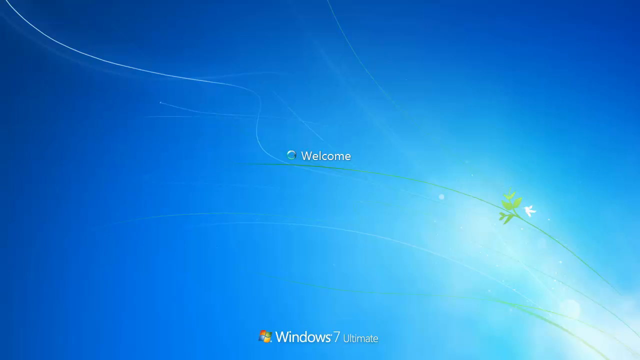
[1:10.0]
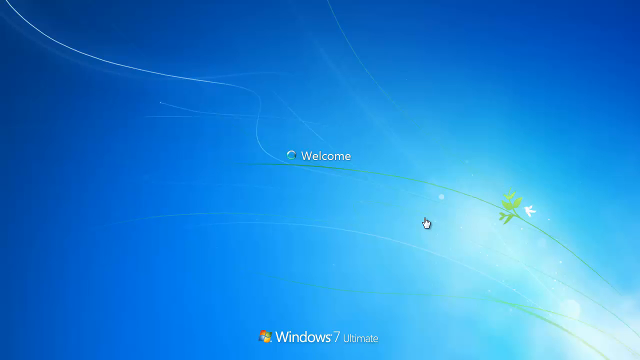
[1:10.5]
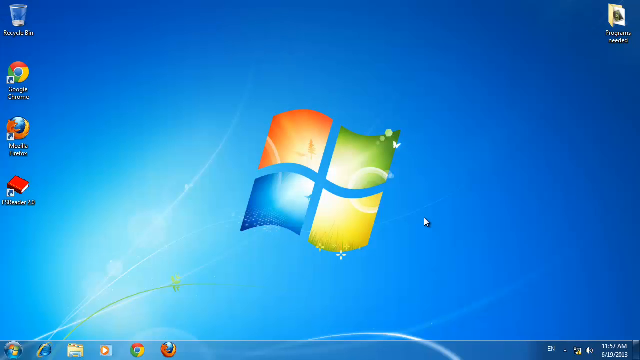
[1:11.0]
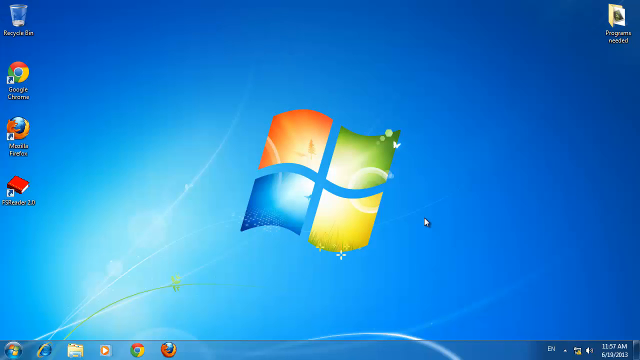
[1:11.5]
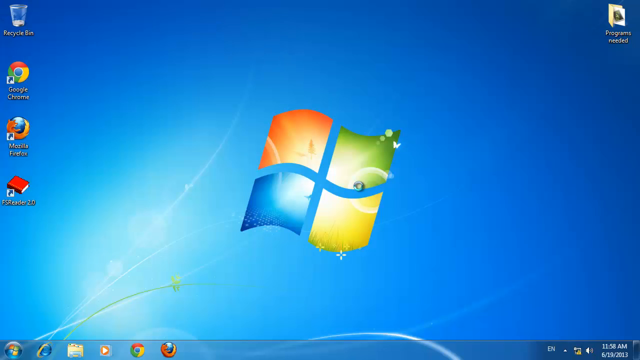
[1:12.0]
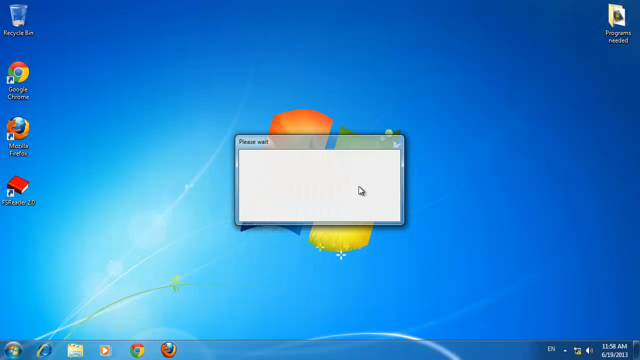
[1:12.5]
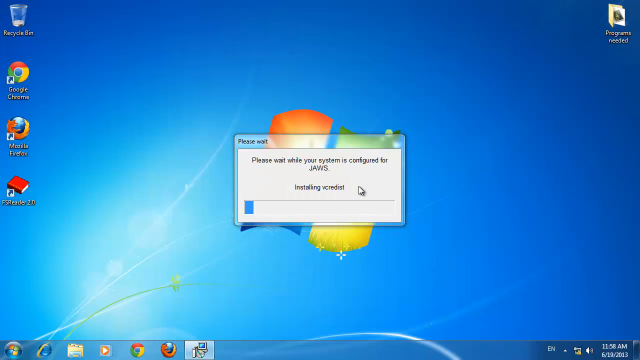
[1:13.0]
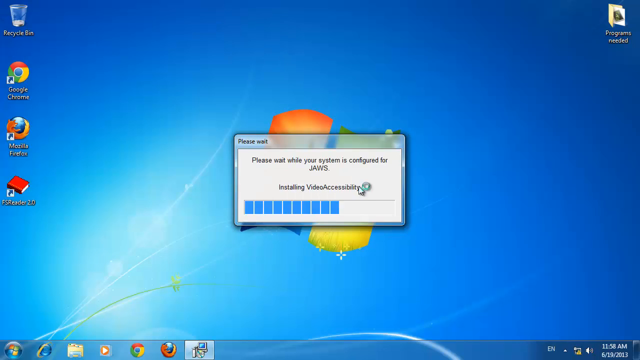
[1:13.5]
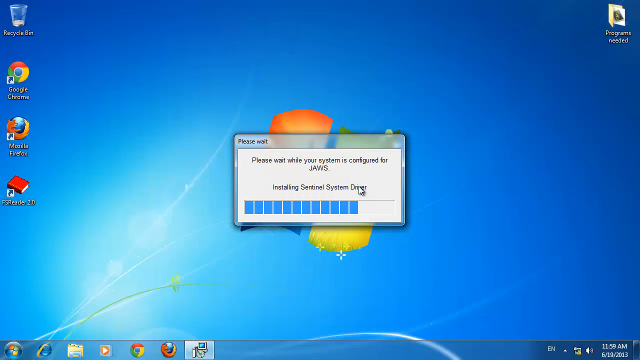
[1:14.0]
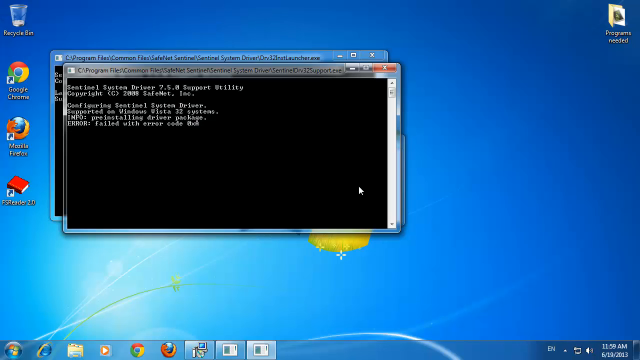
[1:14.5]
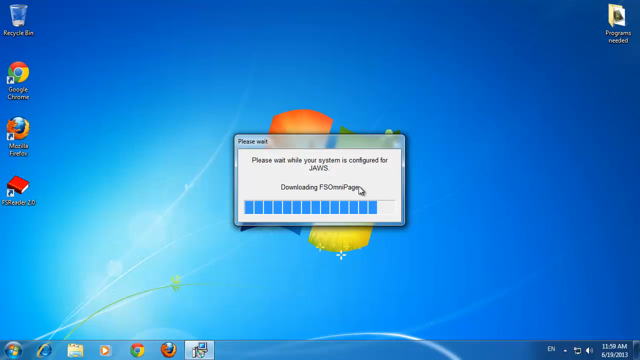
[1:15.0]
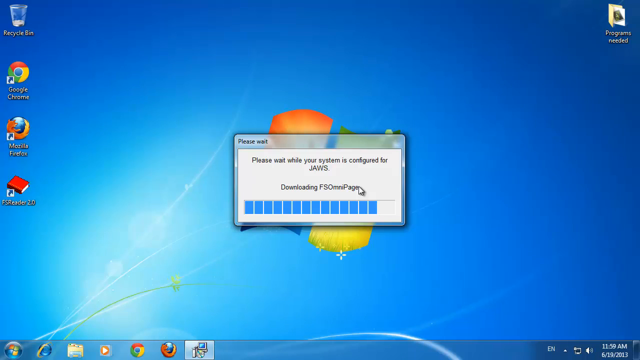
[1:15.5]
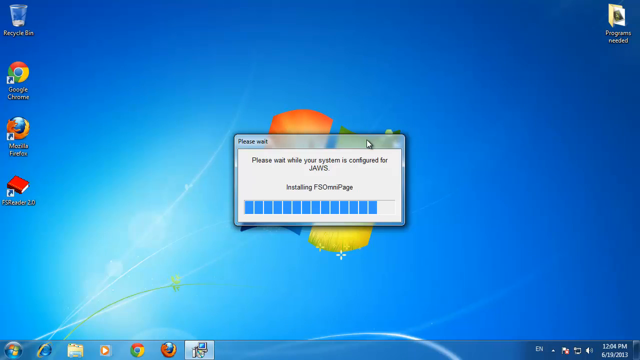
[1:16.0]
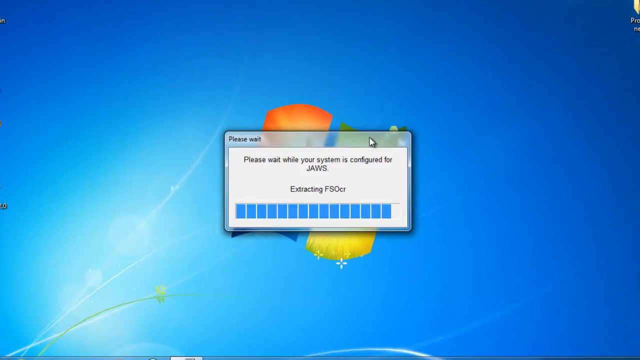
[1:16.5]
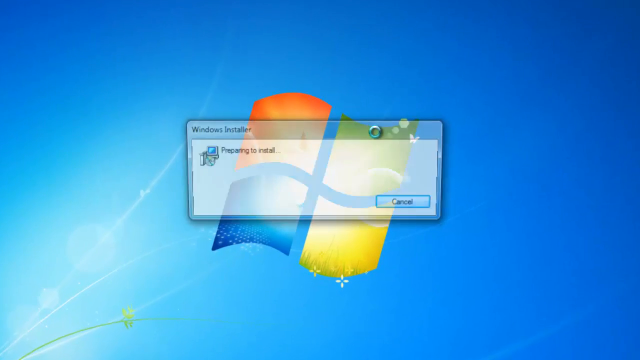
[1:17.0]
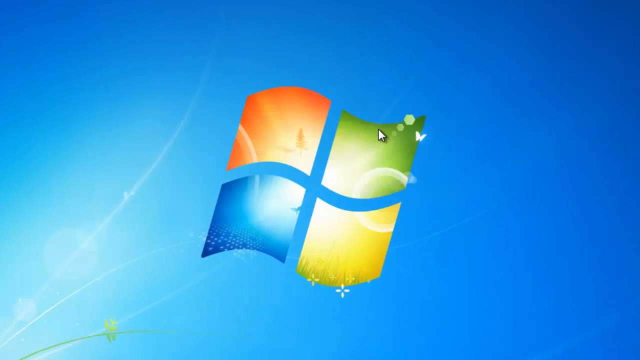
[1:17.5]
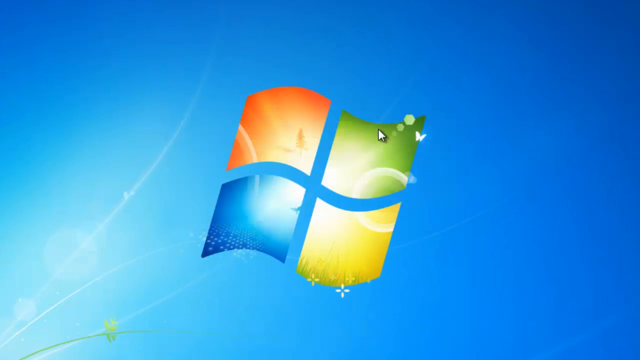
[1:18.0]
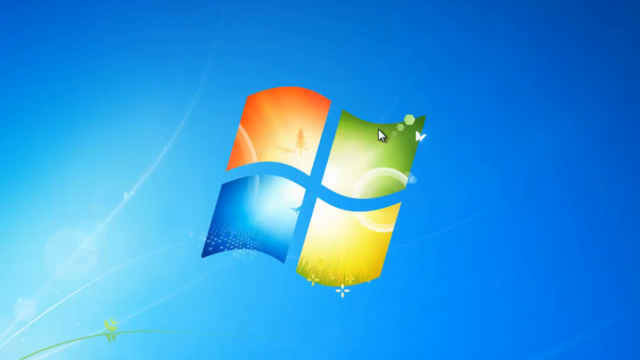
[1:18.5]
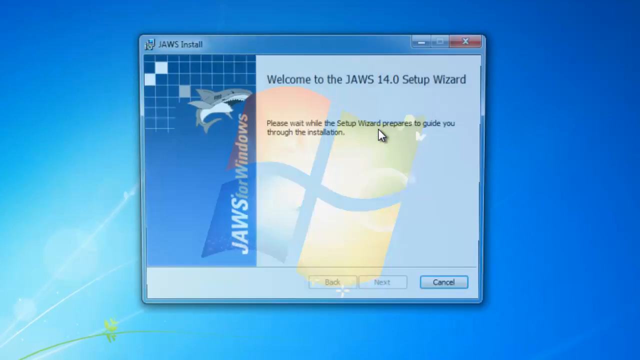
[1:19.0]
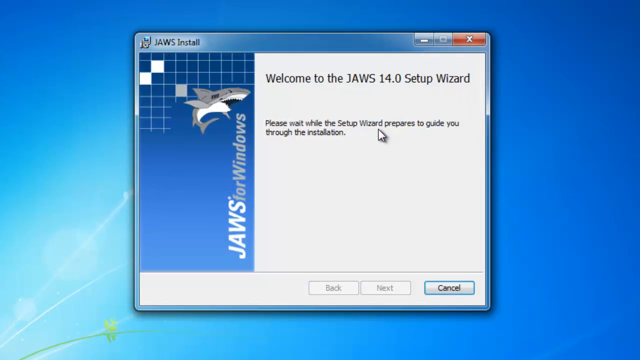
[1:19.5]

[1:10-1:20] A blue background appears to be a sunny blue sky style, with a bit of white cloud in the bottom right corner and a small green plant with a white bloom. In the center is a blue loading symbol with the word "welcome" in white text to its right. The screen then transitions to the Windows desktop, which has four icons on the top left side and a folder in the top right corner, with the Windows logo as the background. Another pop-up appears in the center of the screen with the JAWS program loading and installing files, before two more windows pop up, one on top of the other.